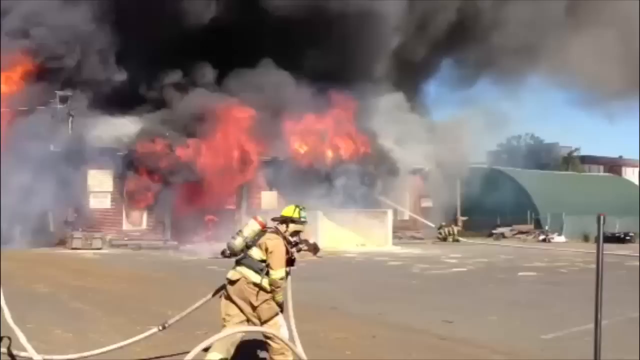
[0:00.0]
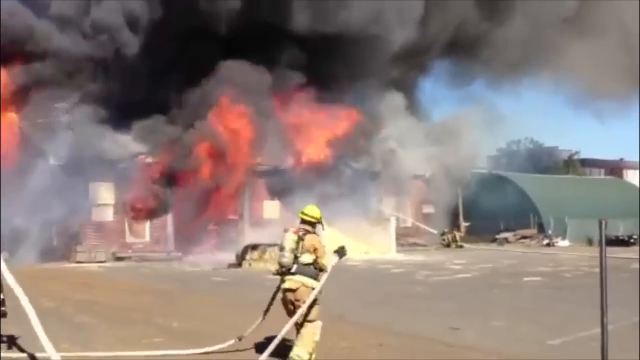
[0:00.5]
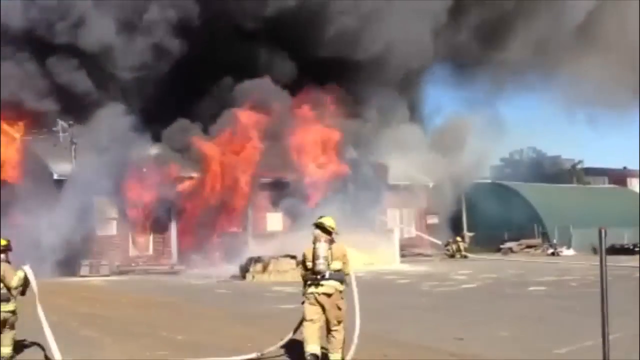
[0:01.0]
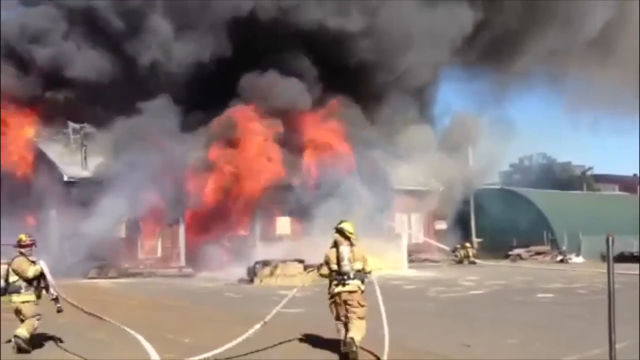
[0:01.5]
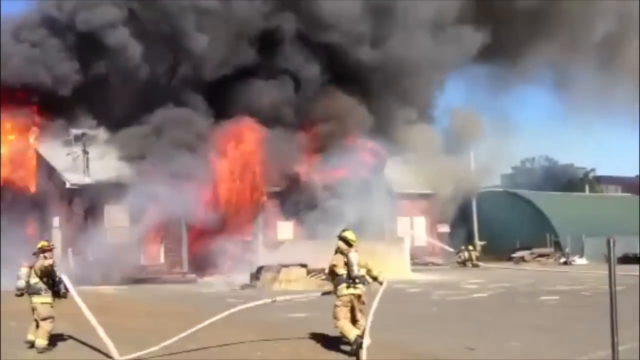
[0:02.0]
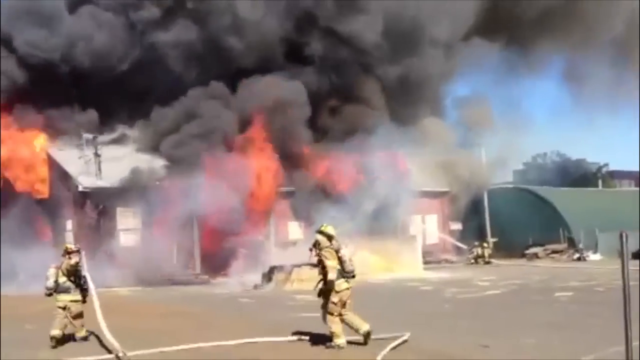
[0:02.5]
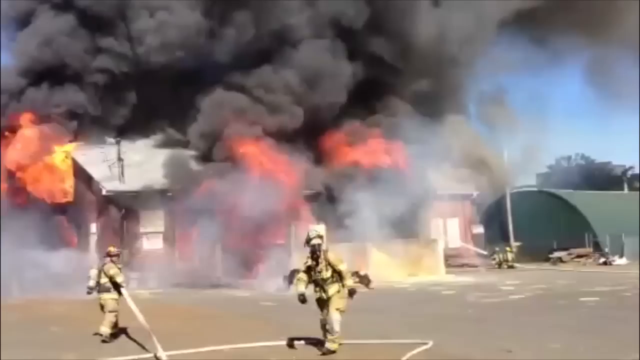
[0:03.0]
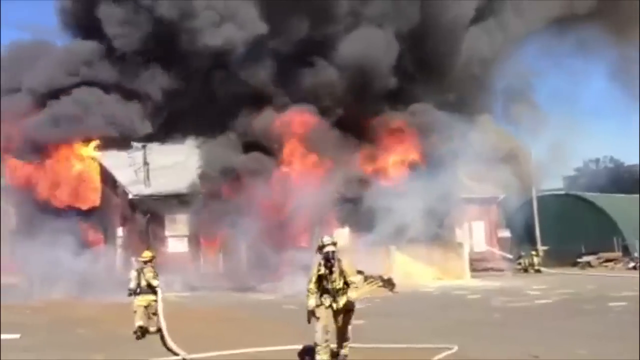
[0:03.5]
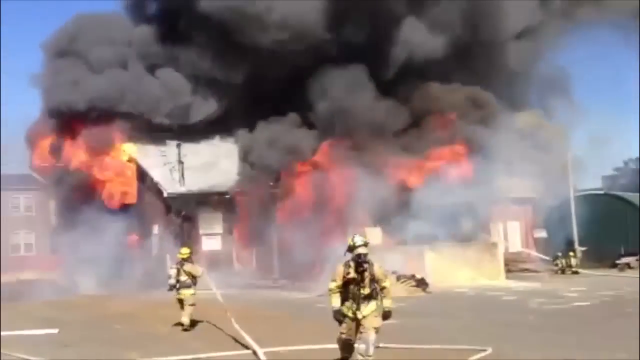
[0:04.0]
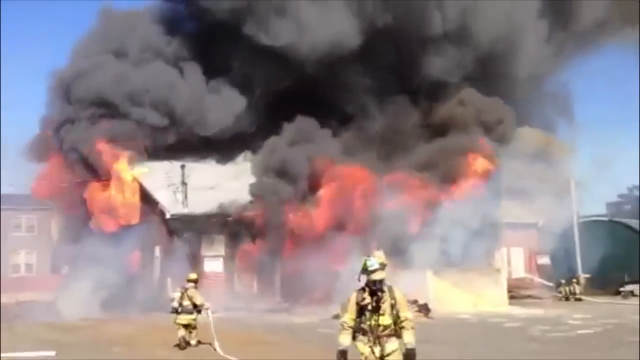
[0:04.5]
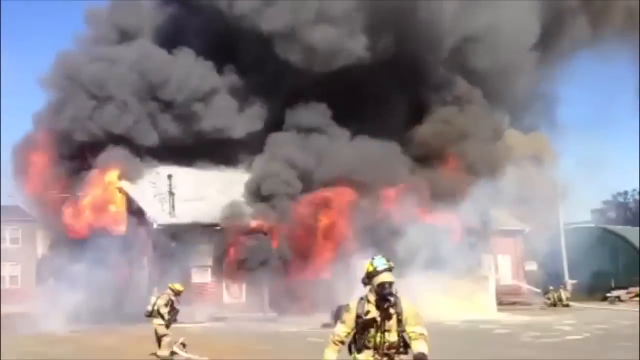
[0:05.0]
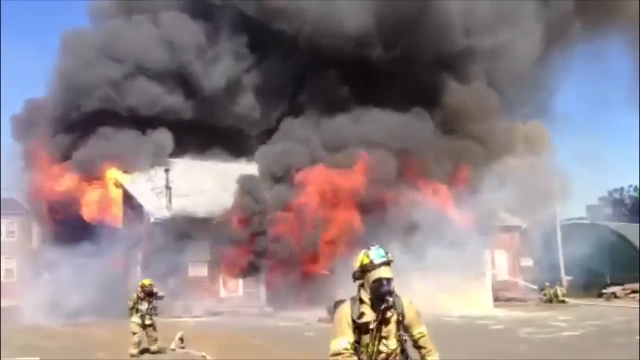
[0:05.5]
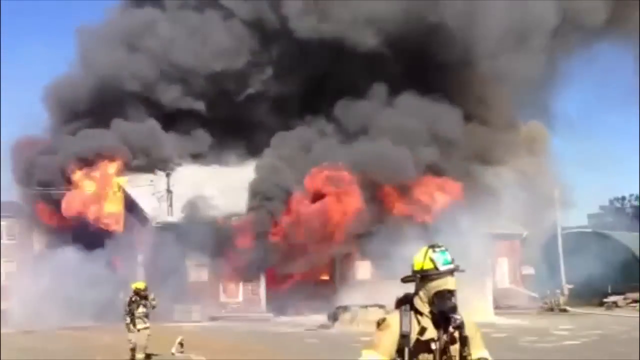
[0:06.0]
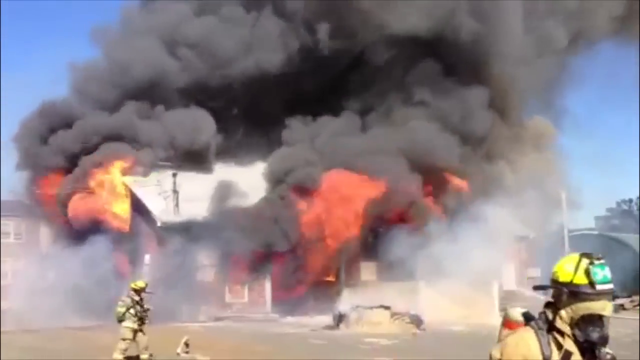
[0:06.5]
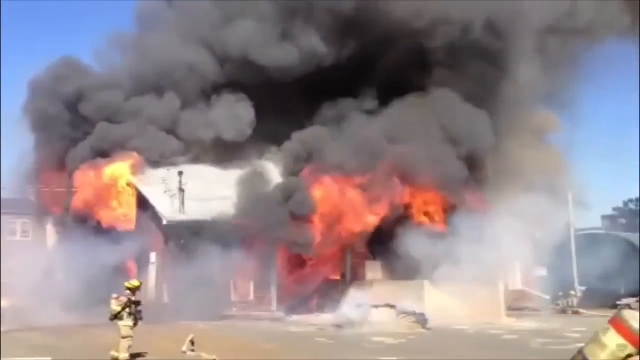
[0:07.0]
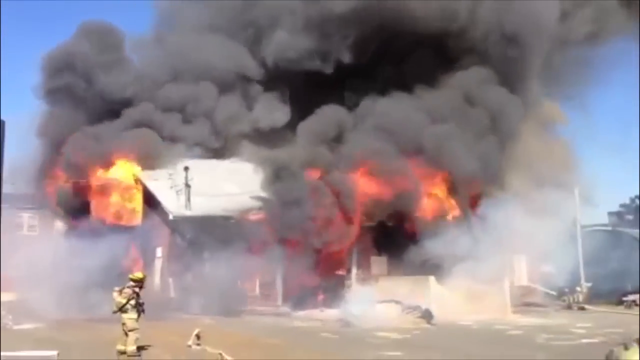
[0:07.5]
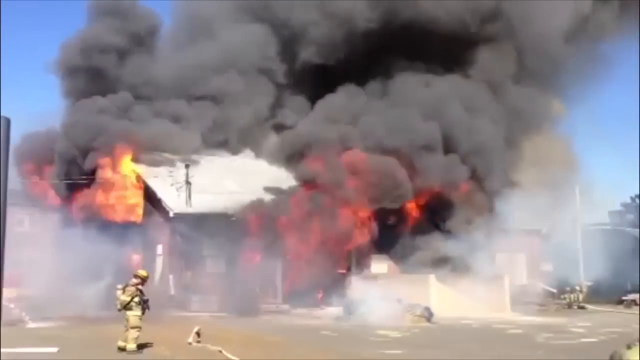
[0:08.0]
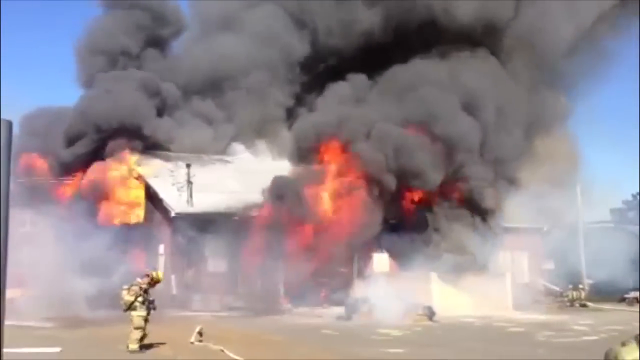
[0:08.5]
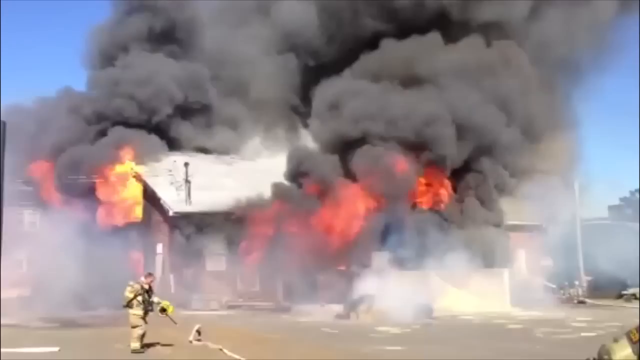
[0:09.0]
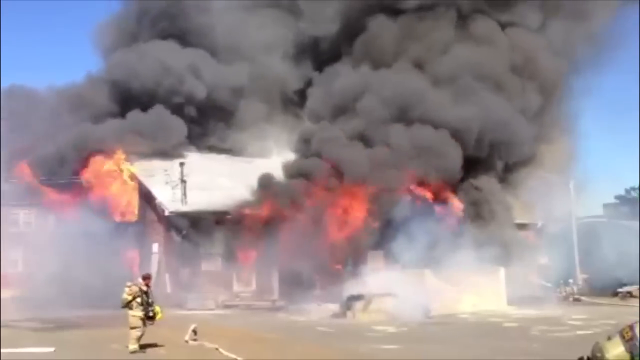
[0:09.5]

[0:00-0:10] The video shows a fire burning at a house. Two firefighters in the foreground, both wearing orange suits and yellow helmets, hold a white hose as they approach the fire. Black smoke is all over the place. One firefighter drops the hose and runs back, while the other slowly approaches the fire. To the right of the house there appears to be a green storage place, and to the left of the house is another building complex. The firefighter in the front takes off his helmet.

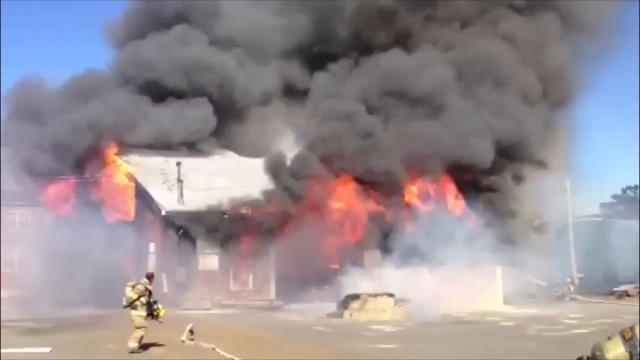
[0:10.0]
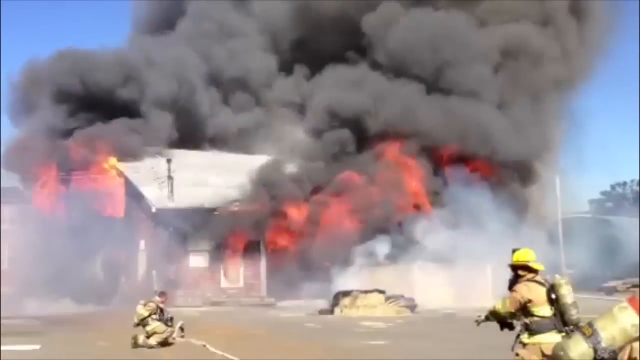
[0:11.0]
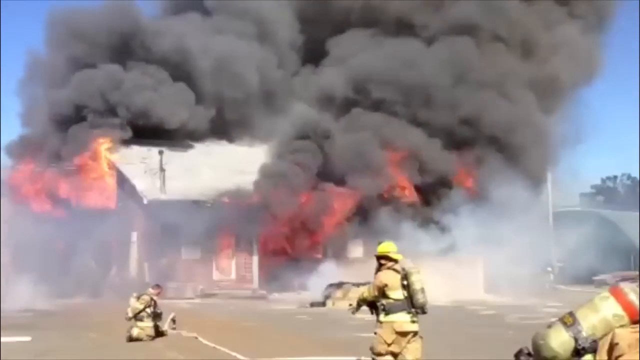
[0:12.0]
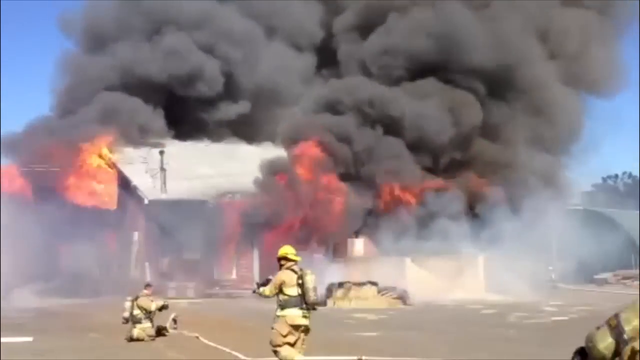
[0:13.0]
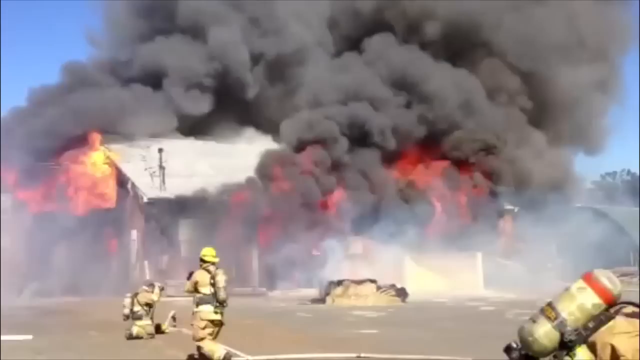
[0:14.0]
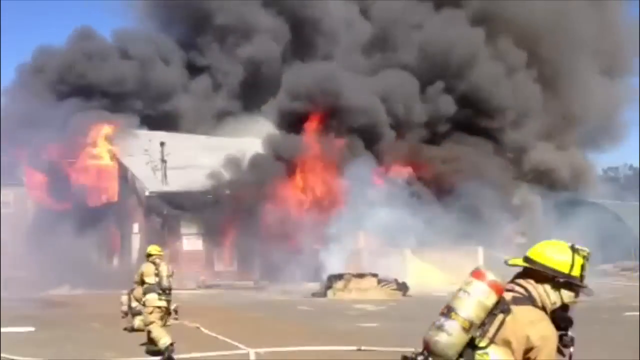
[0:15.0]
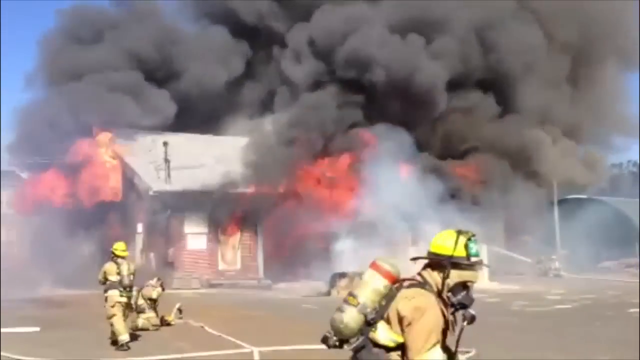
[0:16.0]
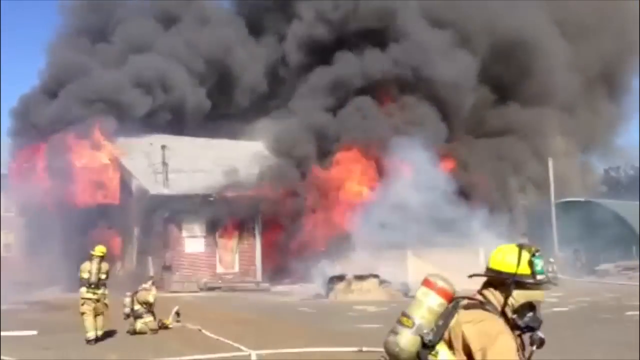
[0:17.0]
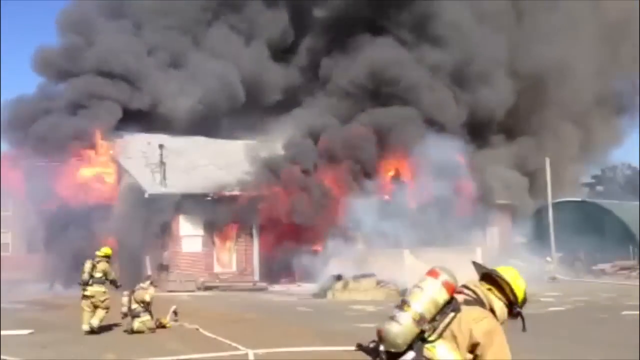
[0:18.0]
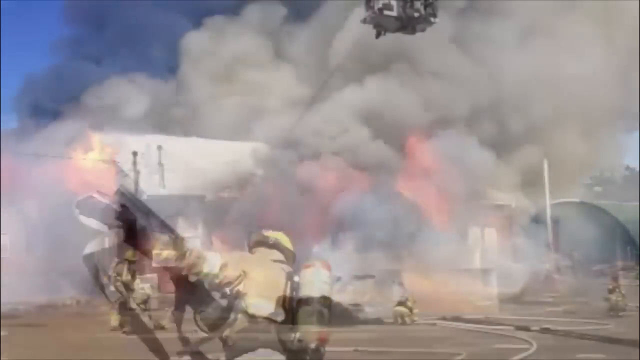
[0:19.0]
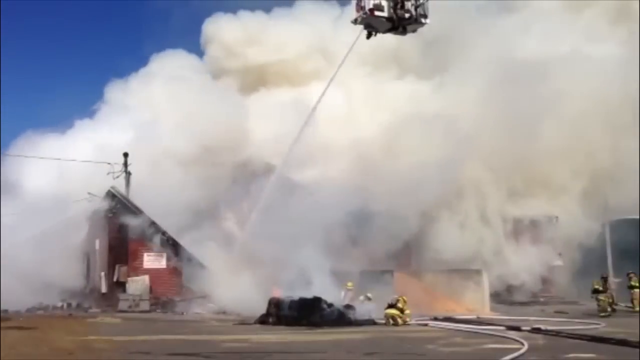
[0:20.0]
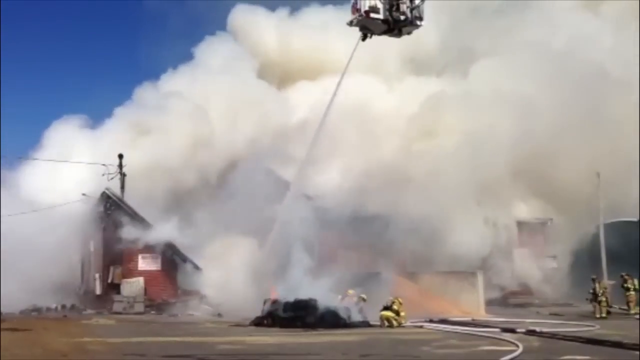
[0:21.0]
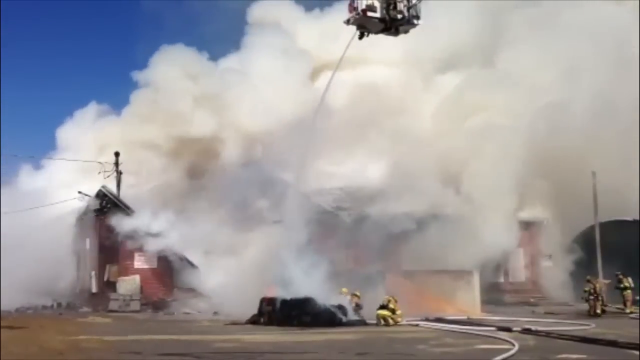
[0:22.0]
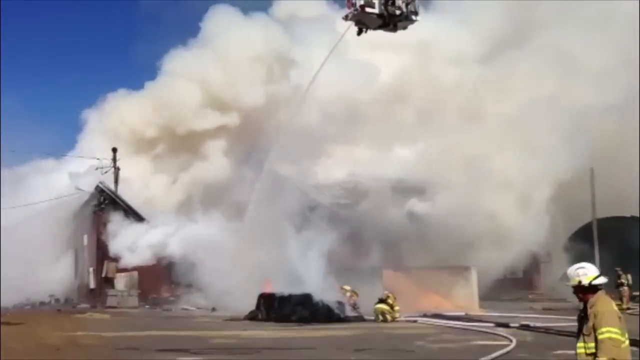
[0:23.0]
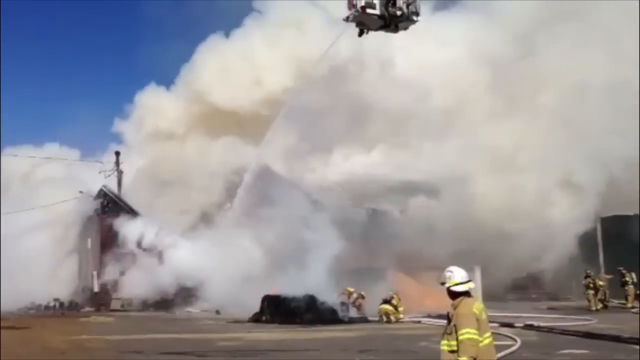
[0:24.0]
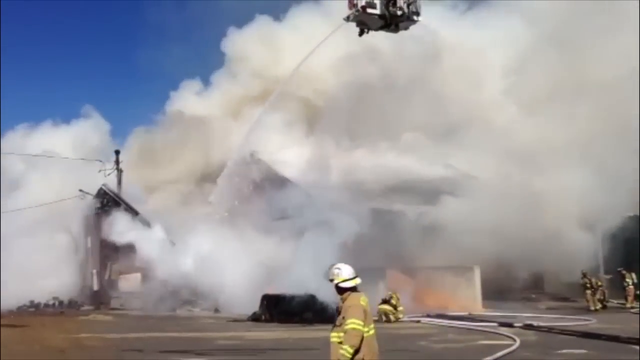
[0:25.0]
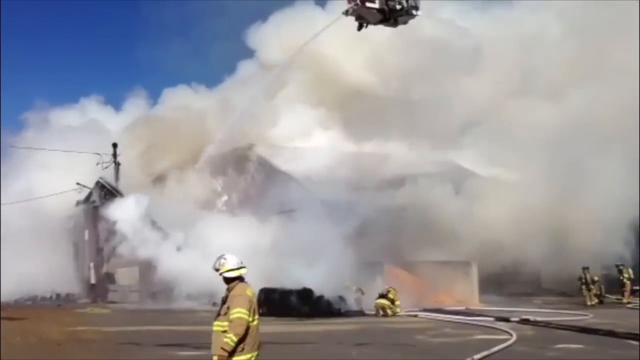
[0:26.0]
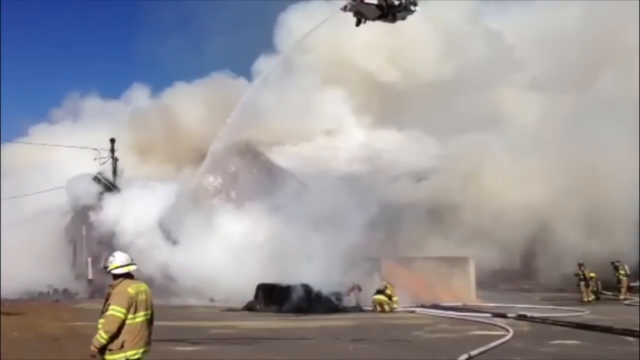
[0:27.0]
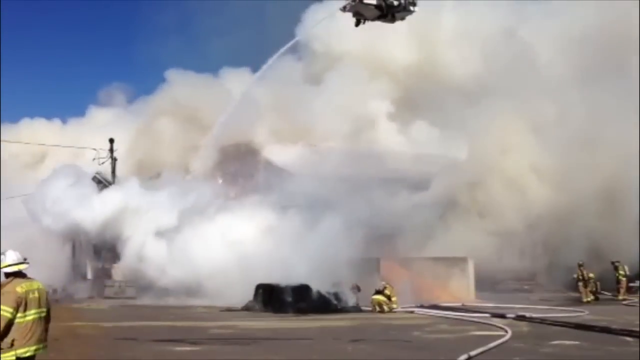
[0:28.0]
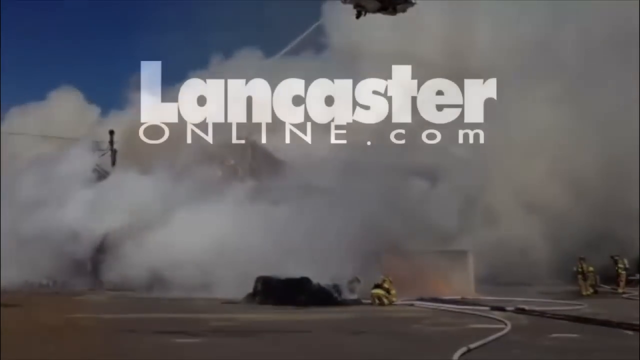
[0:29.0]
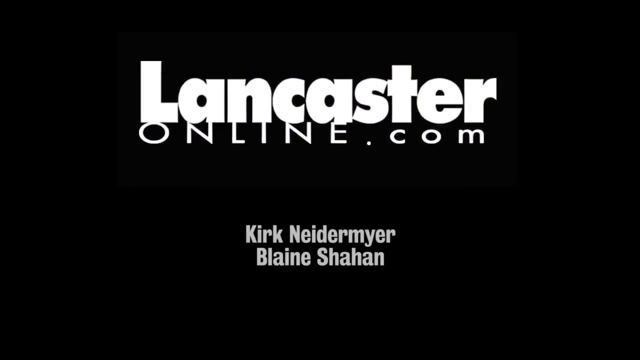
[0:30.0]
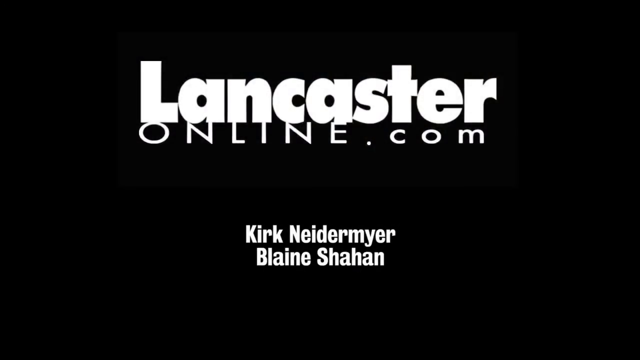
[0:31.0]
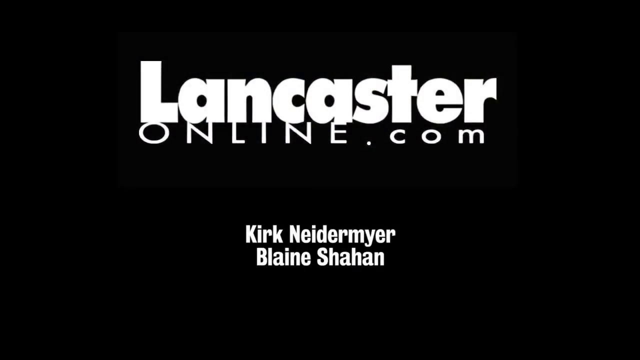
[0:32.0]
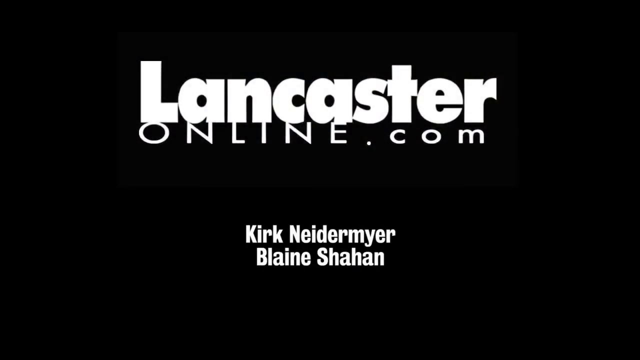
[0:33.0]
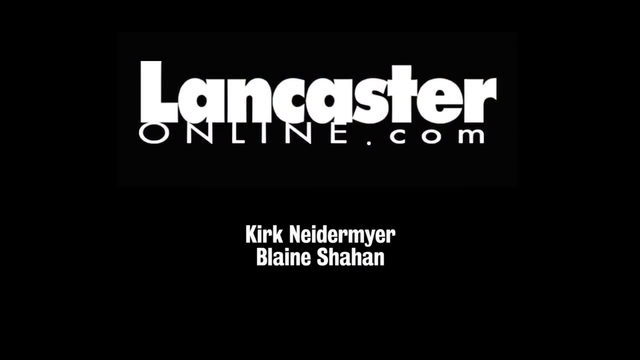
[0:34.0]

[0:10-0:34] A fire envelops a red house with a gray roof, blazing from the inside and emitting very thick, dark black smoke. Two firefighters are in the scene, one behind and one in front. The one in front has taken off their helmet, and the one in the back walks back to the other. Another firefighter appears in the foreground, wearing a tank and a mask. Two of the firefighters have yellow helmets on, while the one at the very front has taken his helmet off. The firefighter at the very front is now kneeling on the ground. The scene transitions to show the fire being sprayed by a water hose from up high, and the smoke is now very thick and white.